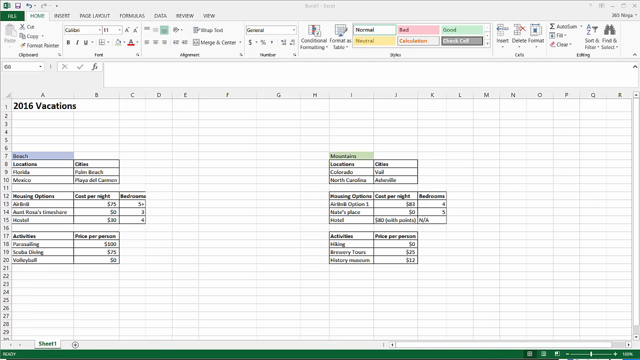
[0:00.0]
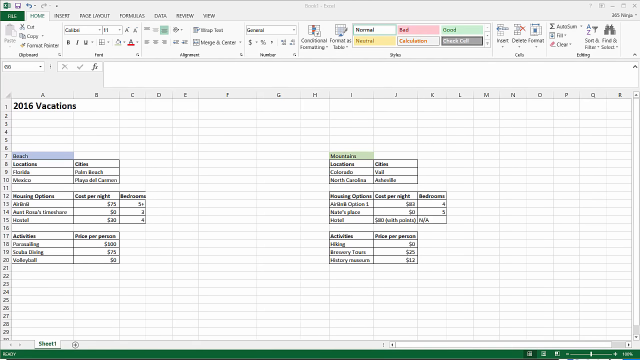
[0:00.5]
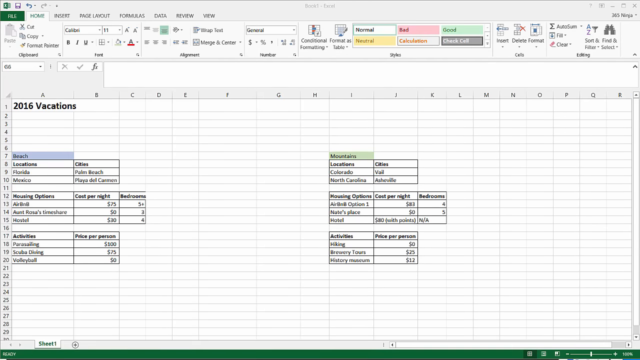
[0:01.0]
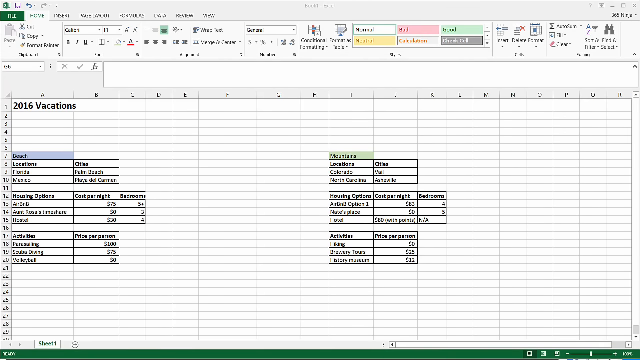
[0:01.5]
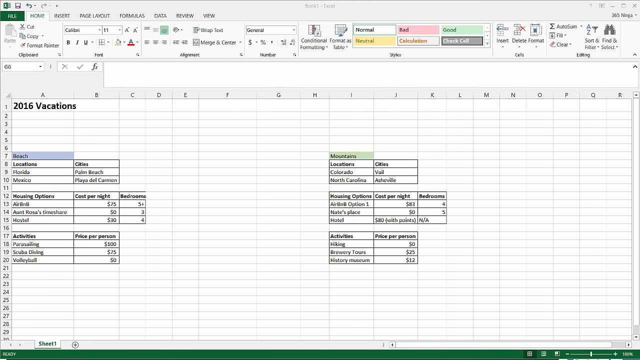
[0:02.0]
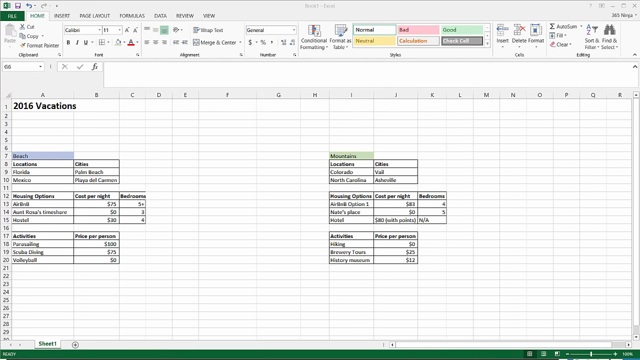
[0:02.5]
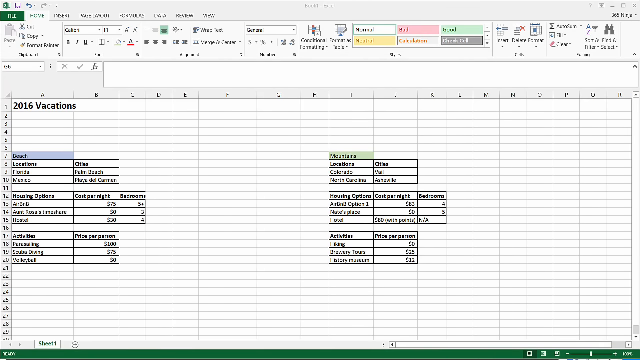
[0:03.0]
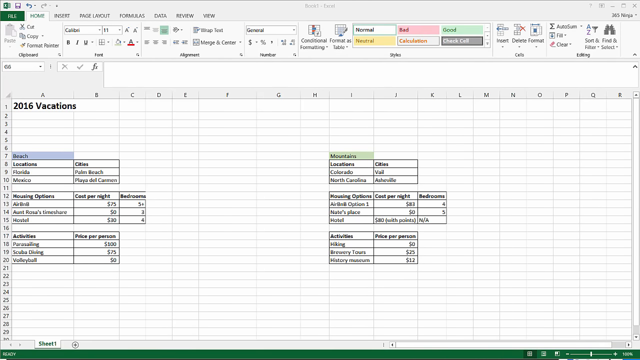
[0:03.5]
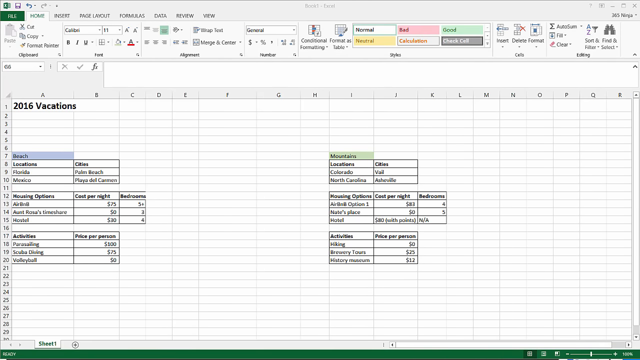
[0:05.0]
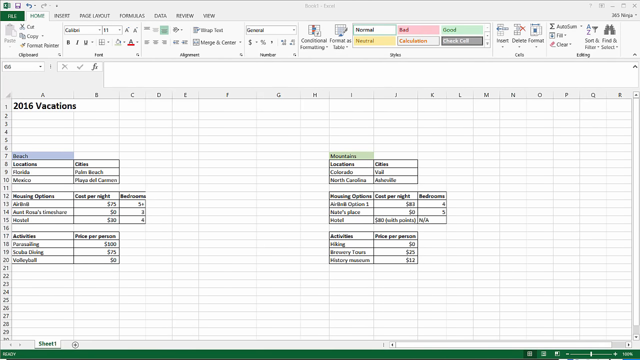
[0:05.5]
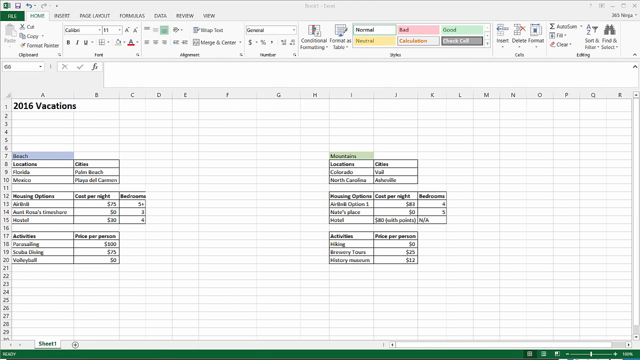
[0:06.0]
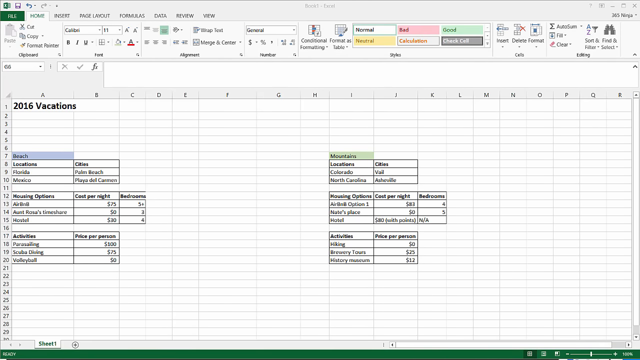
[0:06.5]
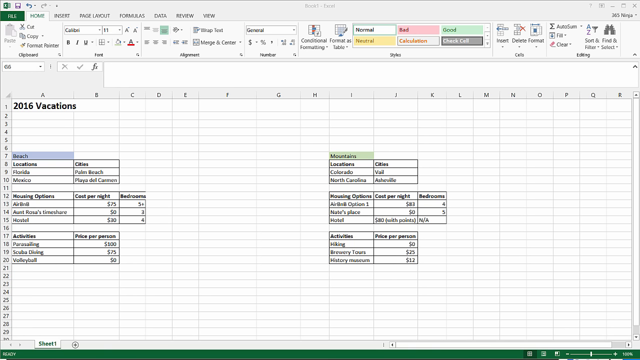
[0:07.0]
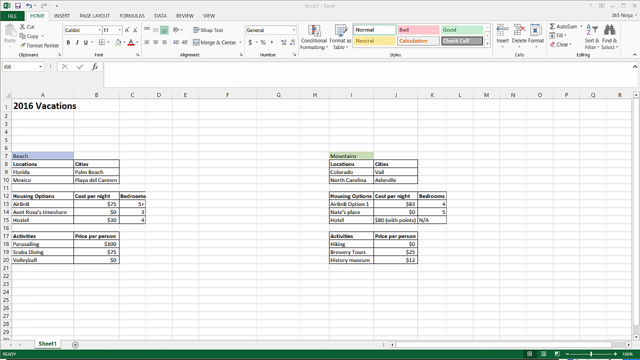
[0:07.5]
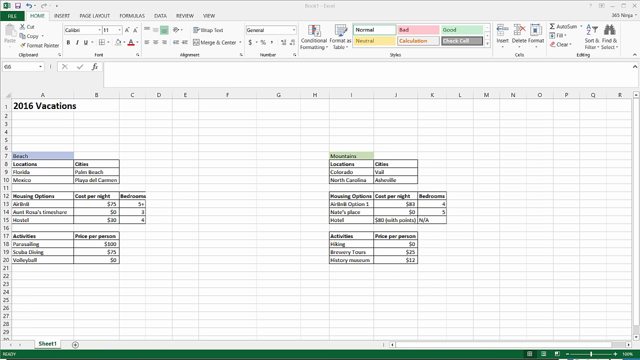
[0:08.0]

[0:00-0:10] A spreadsheet titled with 2016 vacations lists two kinds of vacations: beach vacations and mountain vacations. For the beach, the locations are Florida and Mexico, with cities including Palm Beach, along with the activities and their cost per person, the accommodation cost per night, and how many bedrooms each accommodation has. The mountain side lists the locations Colorado and North Carolina with their cities, the housing options, the cost per night, the number of bedrooms, and the activities, hiking and history museums, with the cost for each person.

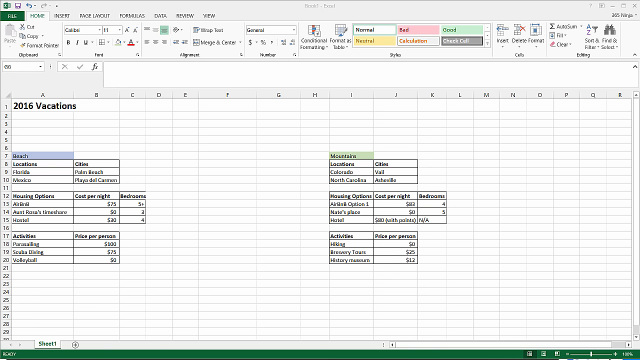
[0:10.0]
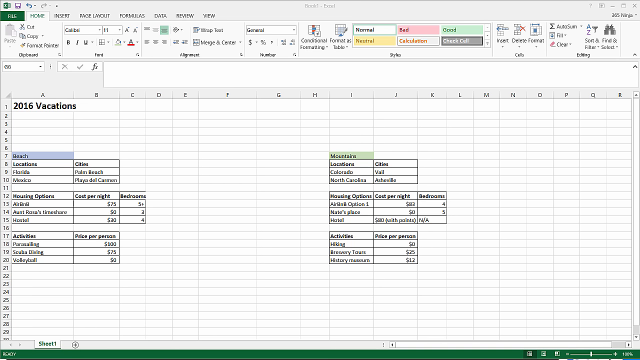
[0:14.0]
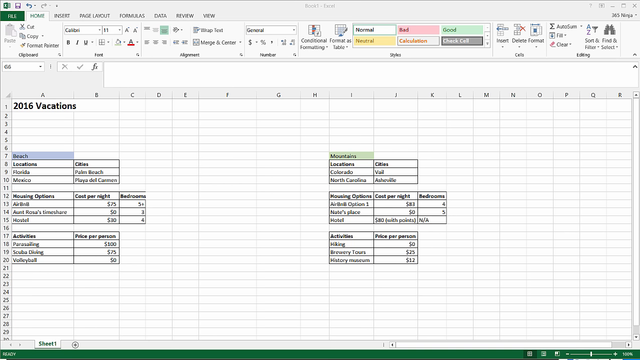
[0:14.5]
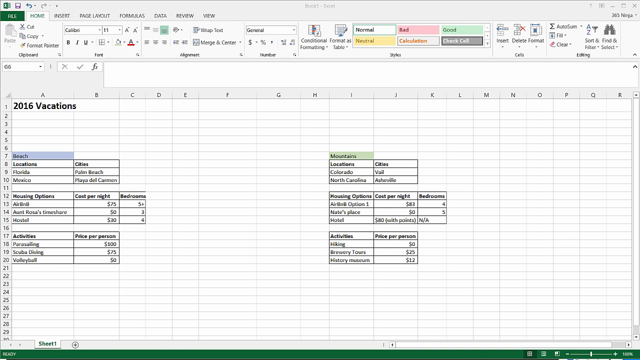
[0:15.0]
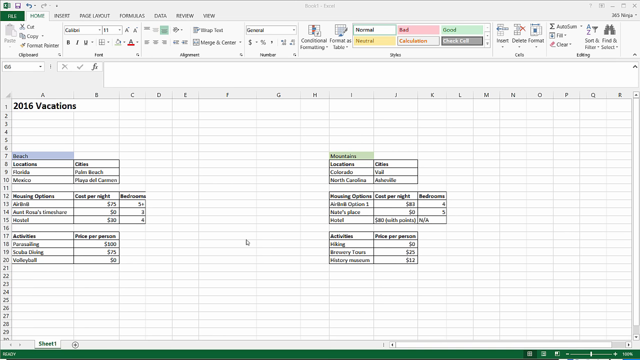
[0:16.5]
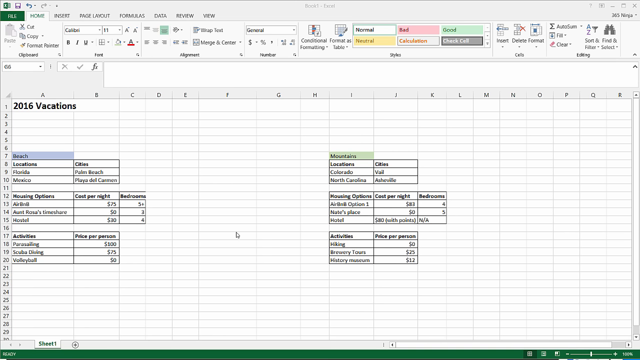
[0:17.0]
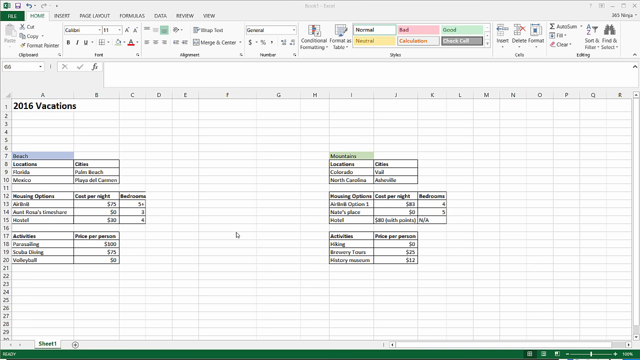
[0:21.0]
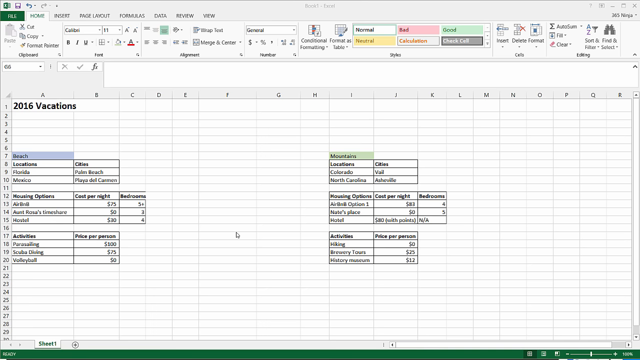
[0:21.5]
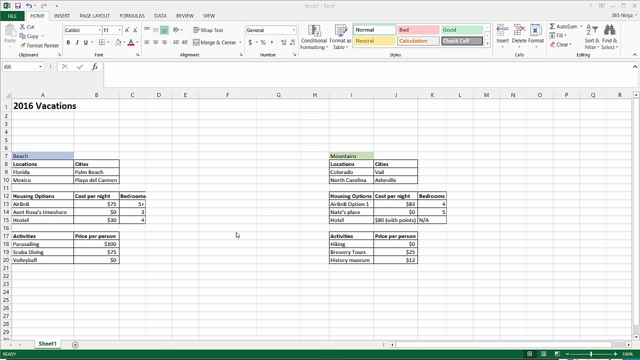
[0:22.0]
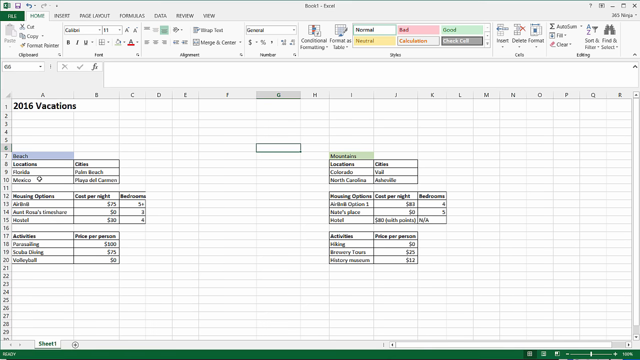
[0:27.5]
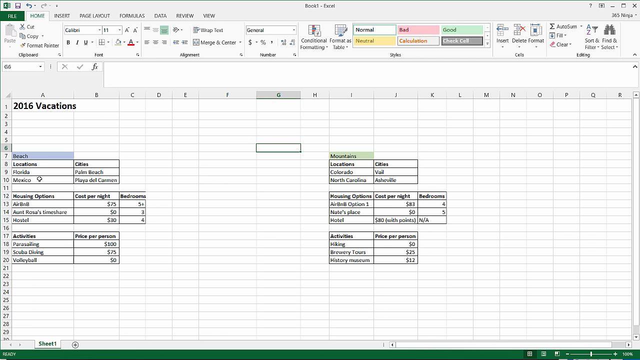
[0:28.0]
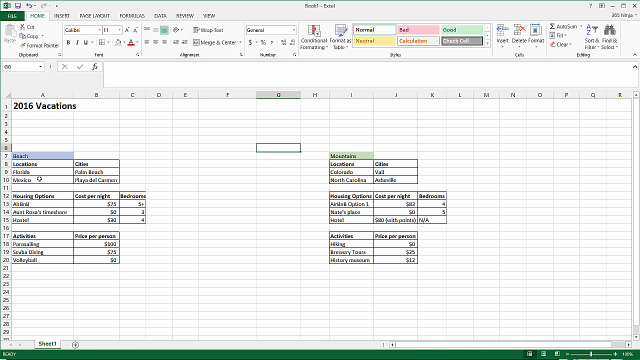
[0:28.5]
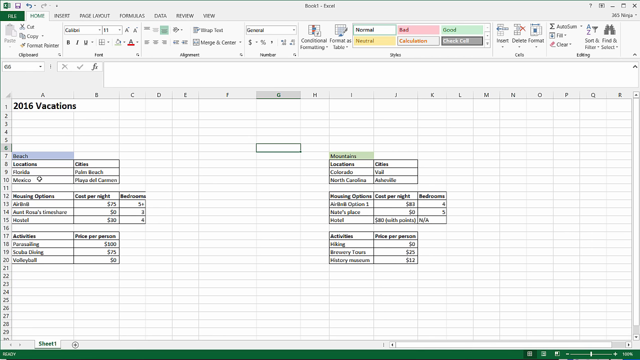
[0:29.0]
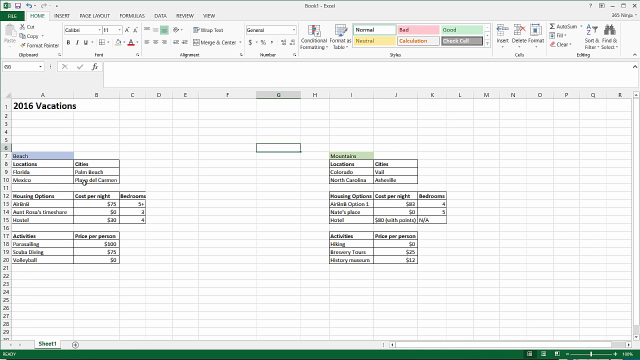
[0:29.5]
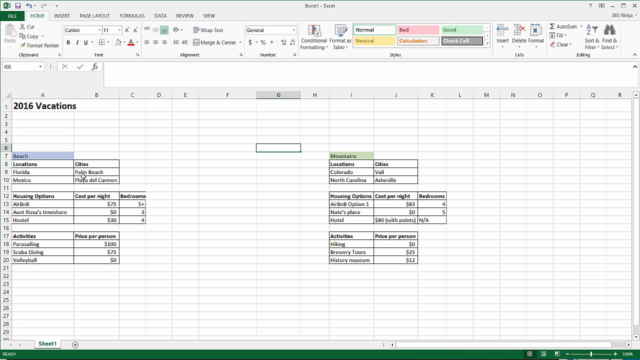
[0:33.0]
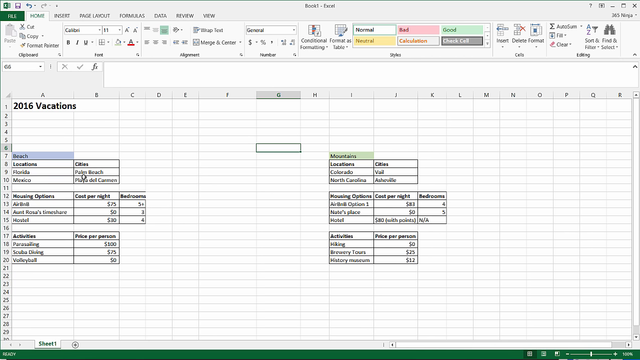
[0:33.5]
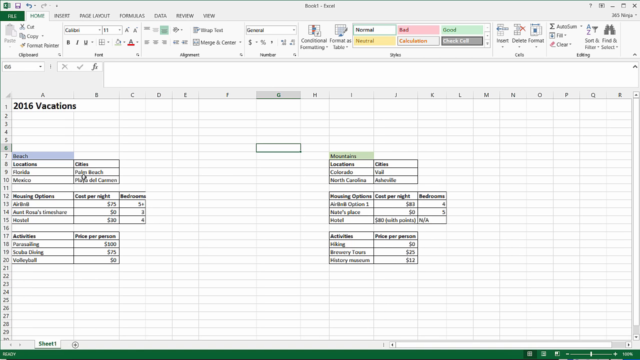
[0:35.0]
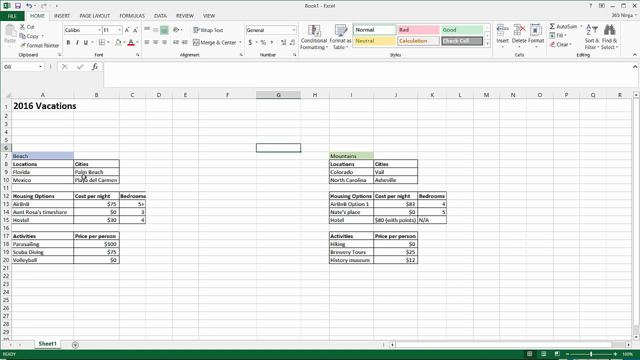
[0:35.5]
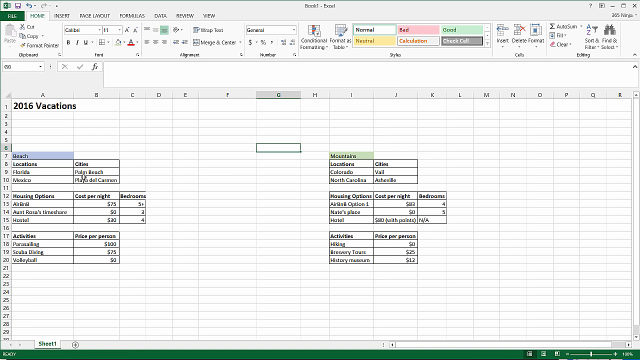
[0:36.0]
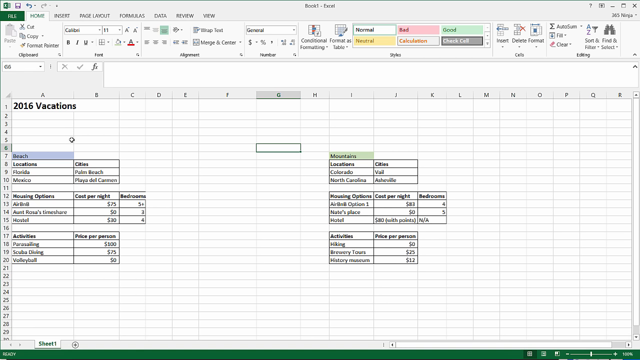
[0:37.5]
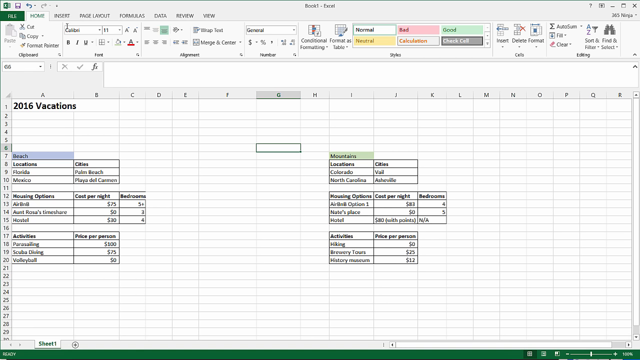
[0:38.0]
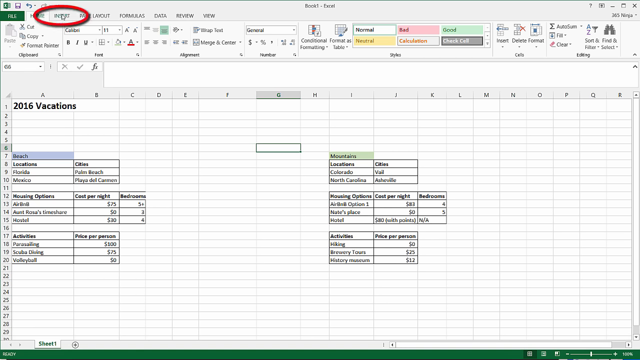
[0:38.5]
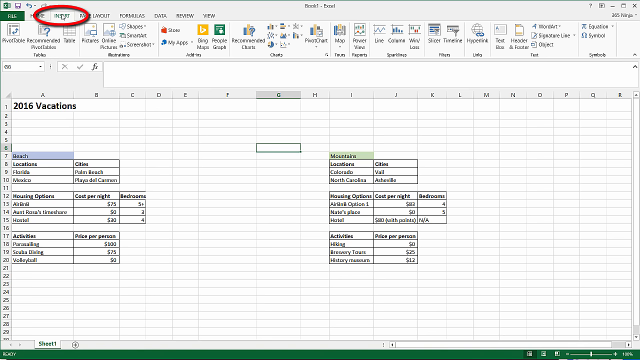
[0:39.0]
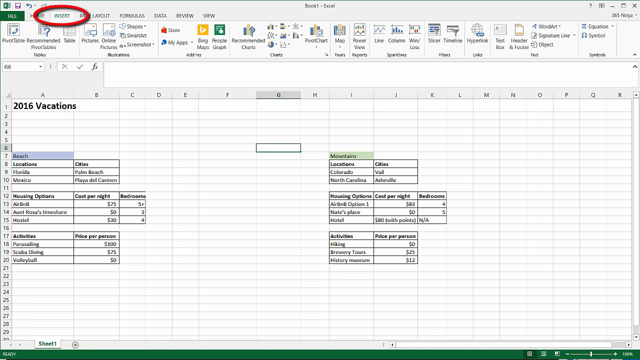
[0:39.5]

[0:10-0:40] The spreadsheet plans someone's vacations for 2016, showing two kinds of vacations, beach and mountain, with their locations. For the beach vacation, the locations are Florida and Mexico, and the sheet shows the housing options, the name of each accommodation, the cost per night, the number of bedrooms, and the beach activities. The mountain vacation section also has locations and cities for the accommodations, the cost per night, the number of bedrooms, and the activities with their price per person: hiking at $0, Beverly Tours at $25, and history museums at $12. The beach activities are paragliding at $500 per person, scuba diving at $75, and volleyball at $0.